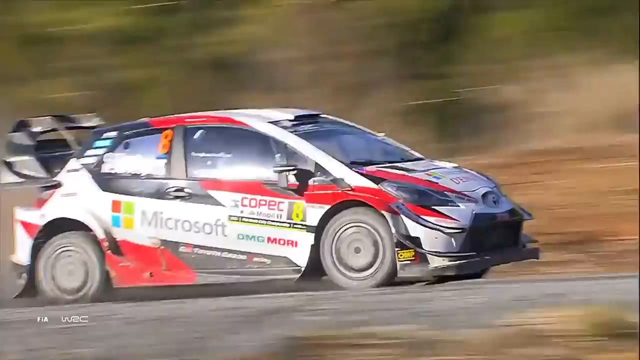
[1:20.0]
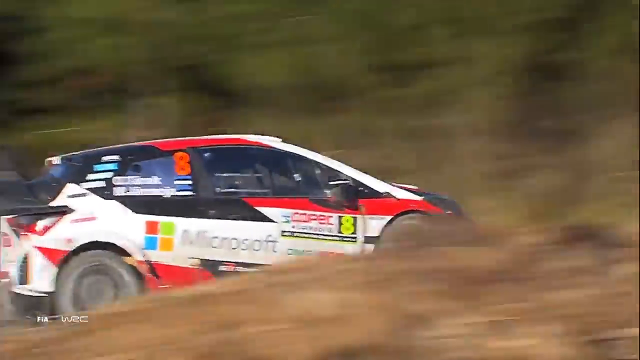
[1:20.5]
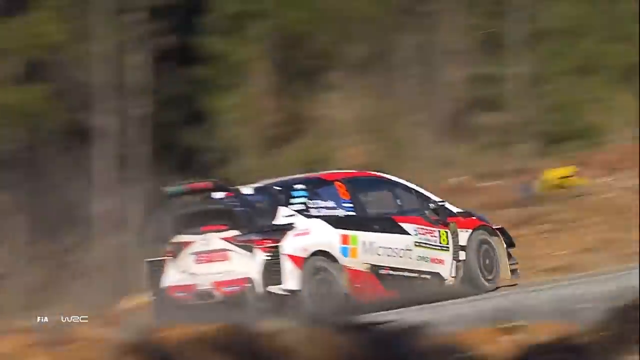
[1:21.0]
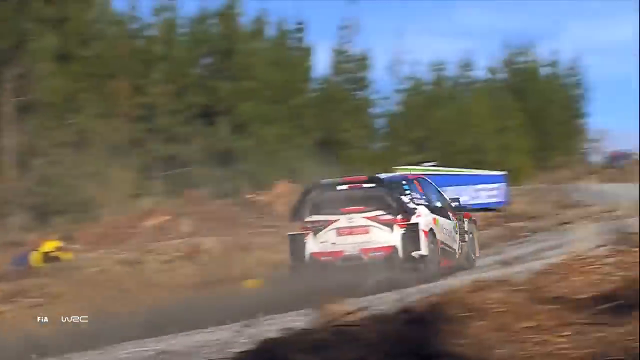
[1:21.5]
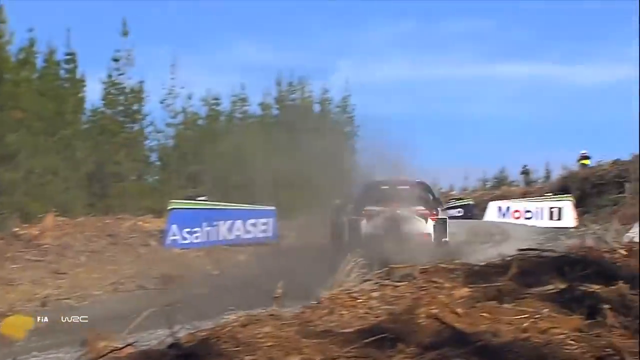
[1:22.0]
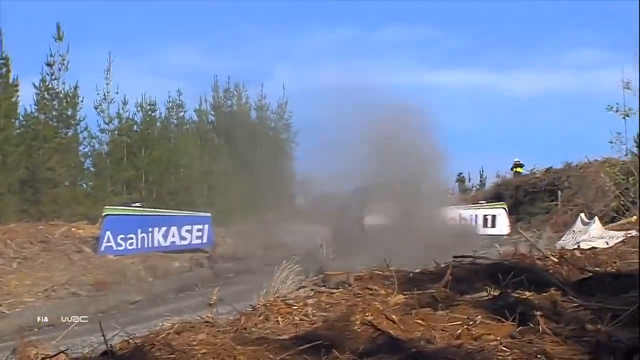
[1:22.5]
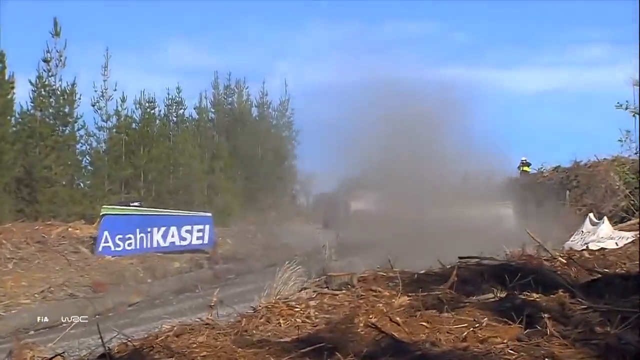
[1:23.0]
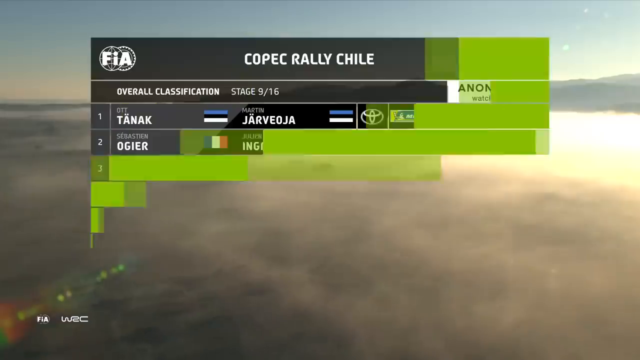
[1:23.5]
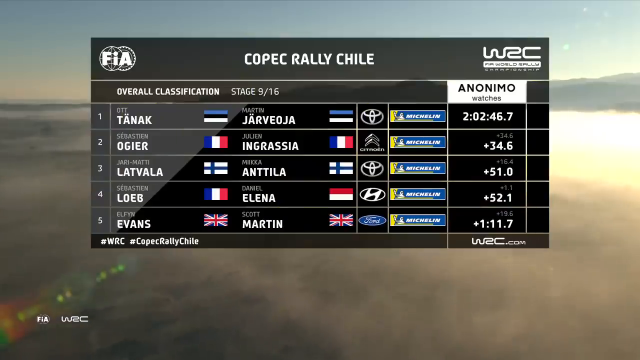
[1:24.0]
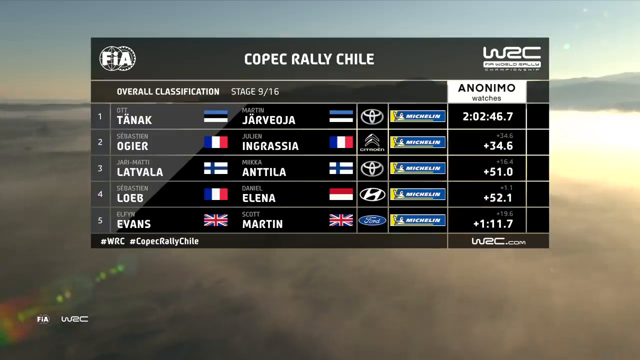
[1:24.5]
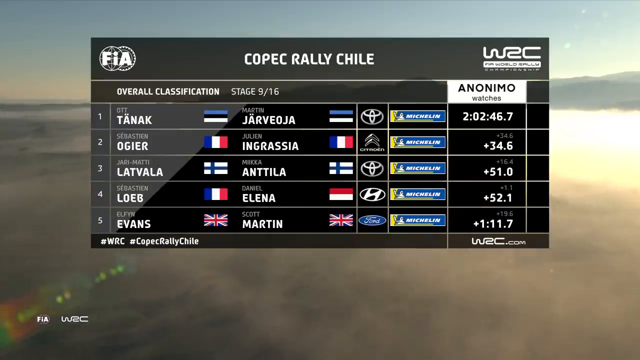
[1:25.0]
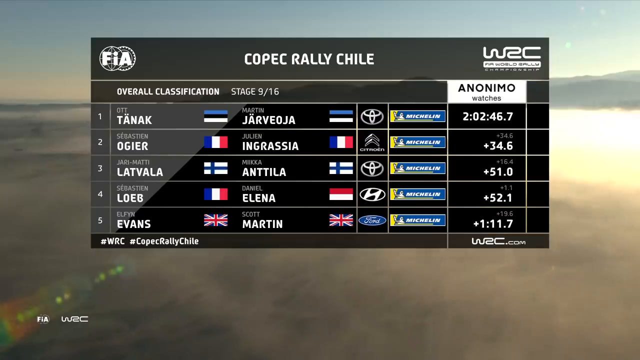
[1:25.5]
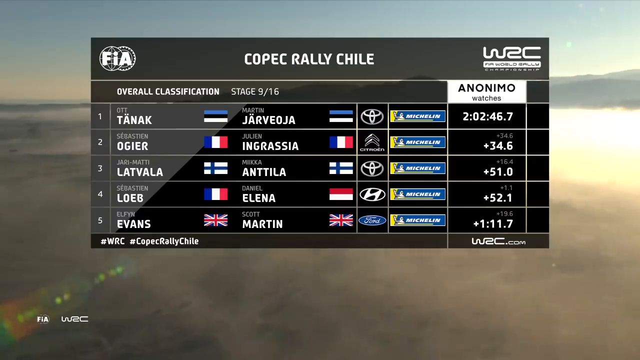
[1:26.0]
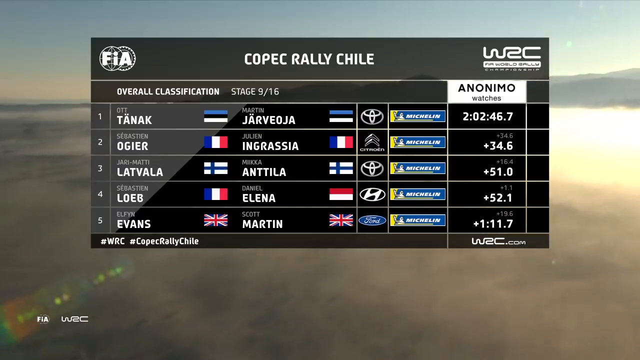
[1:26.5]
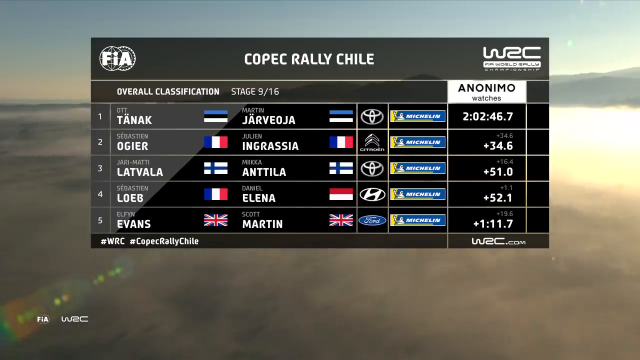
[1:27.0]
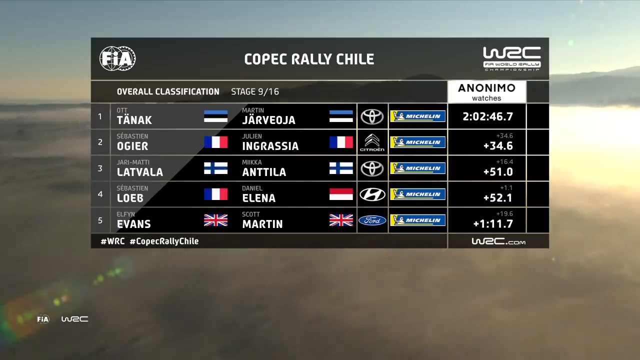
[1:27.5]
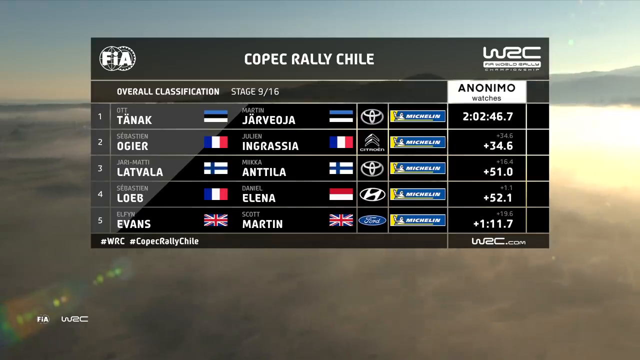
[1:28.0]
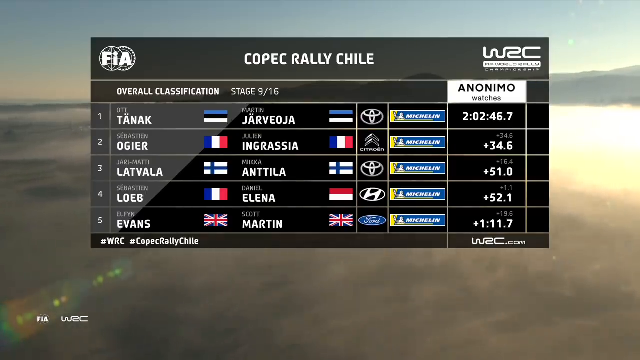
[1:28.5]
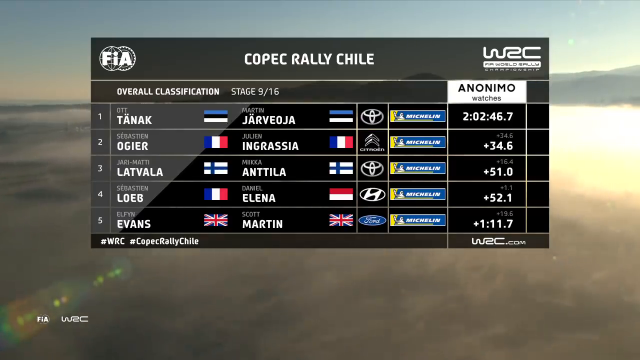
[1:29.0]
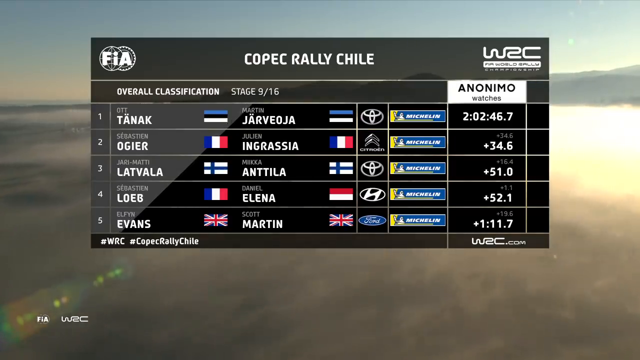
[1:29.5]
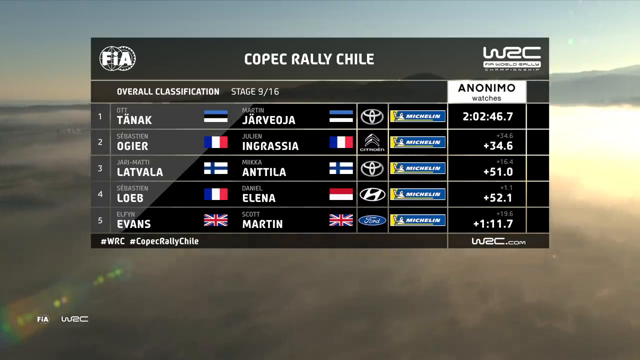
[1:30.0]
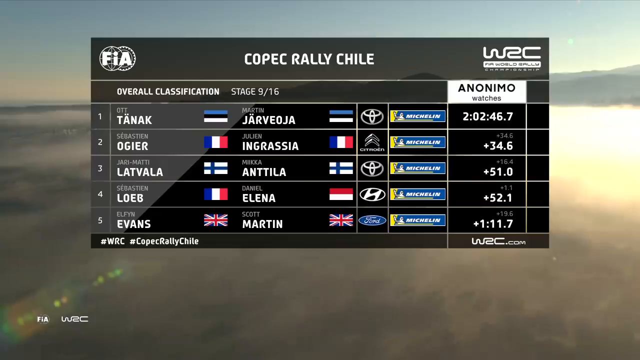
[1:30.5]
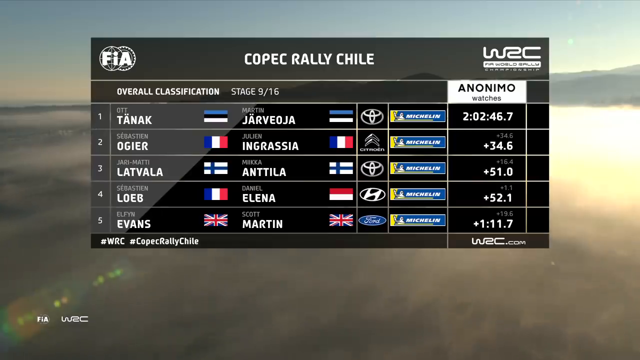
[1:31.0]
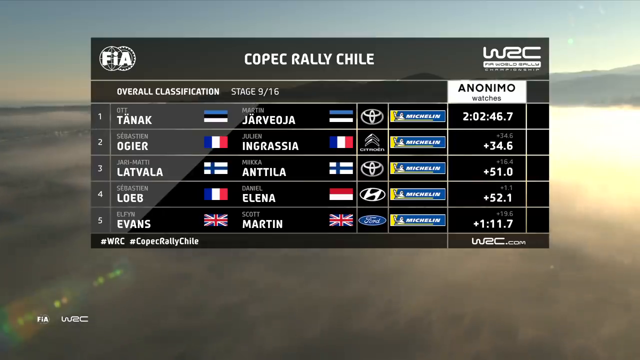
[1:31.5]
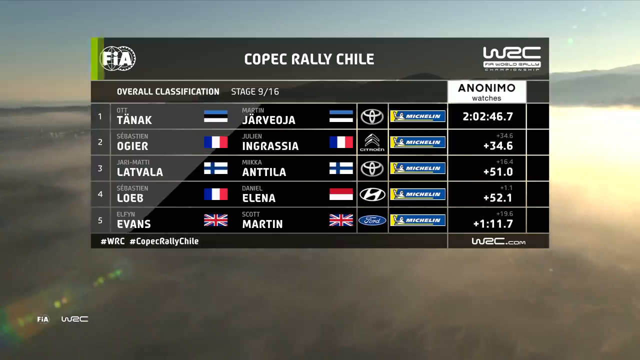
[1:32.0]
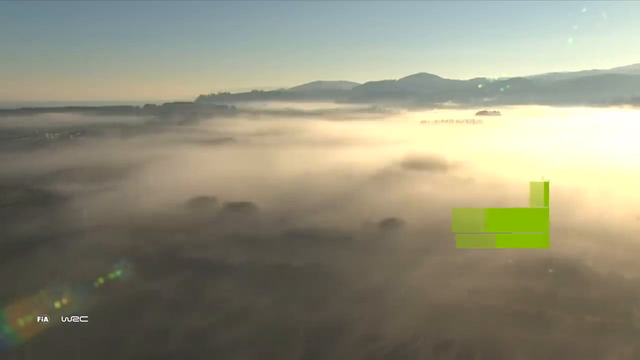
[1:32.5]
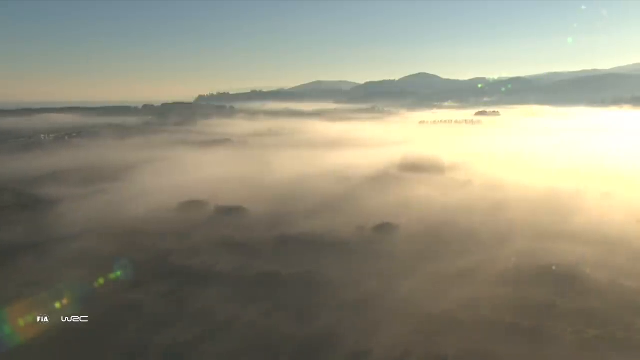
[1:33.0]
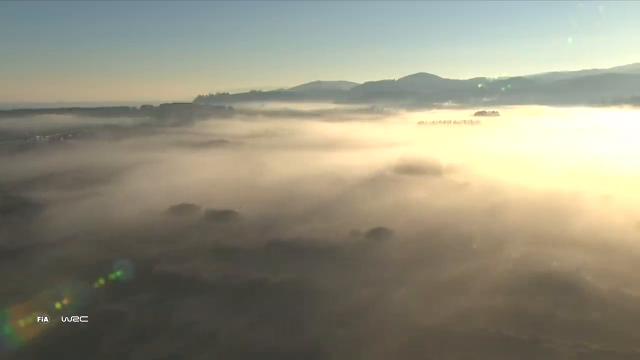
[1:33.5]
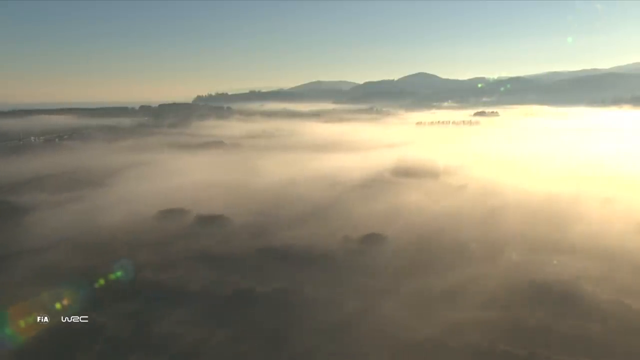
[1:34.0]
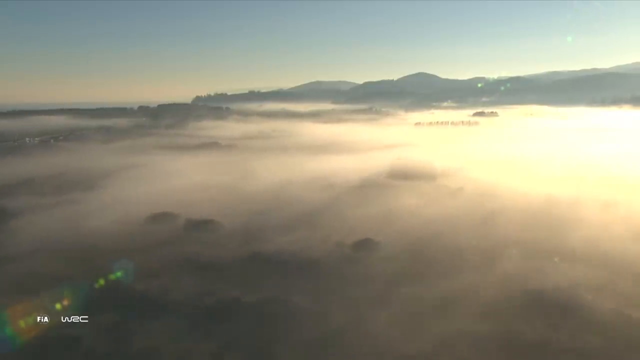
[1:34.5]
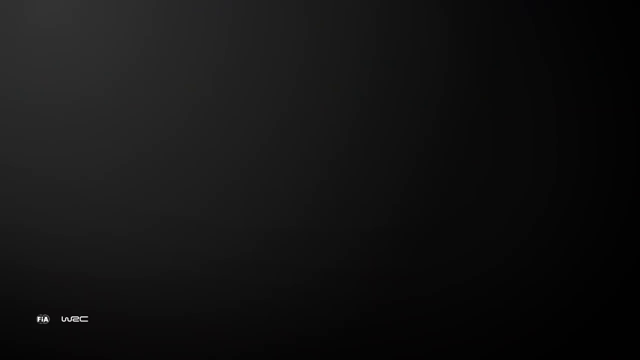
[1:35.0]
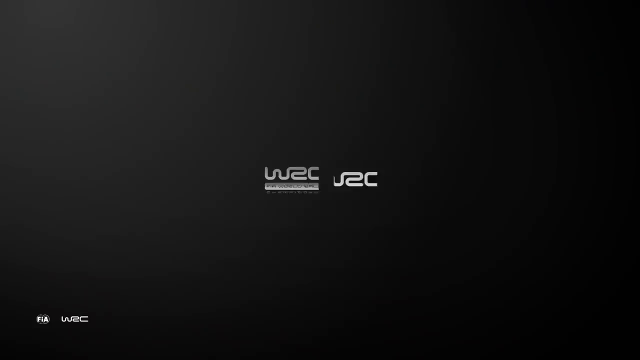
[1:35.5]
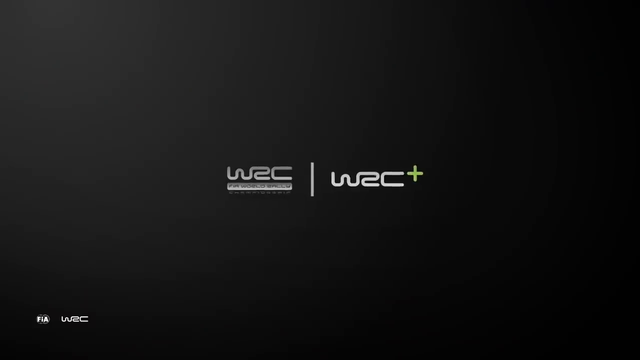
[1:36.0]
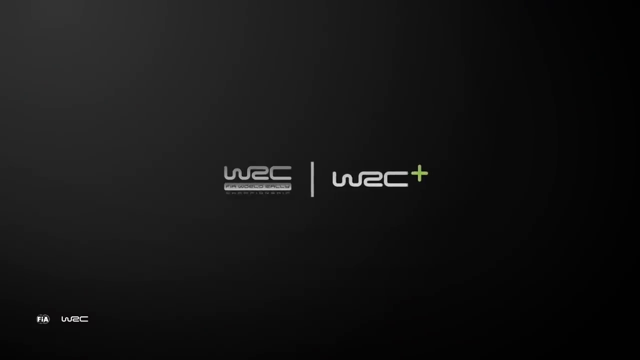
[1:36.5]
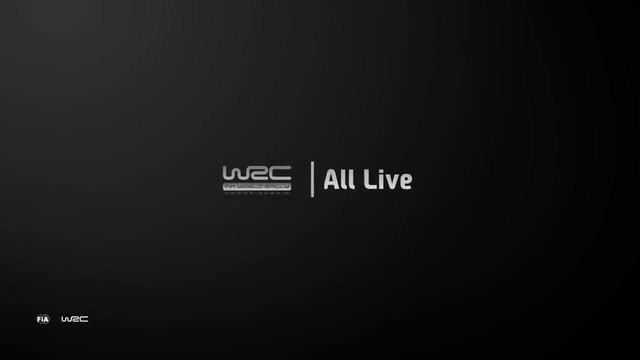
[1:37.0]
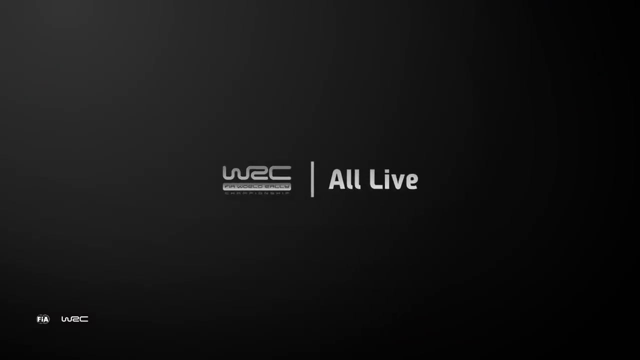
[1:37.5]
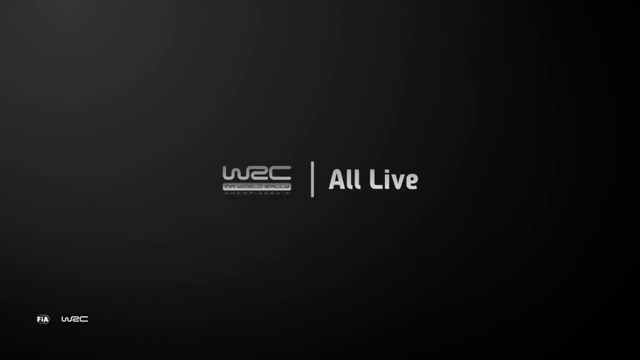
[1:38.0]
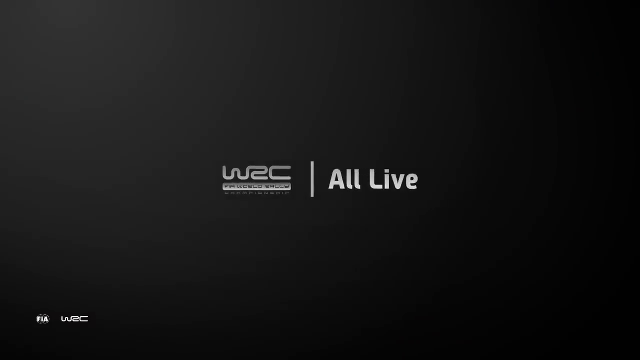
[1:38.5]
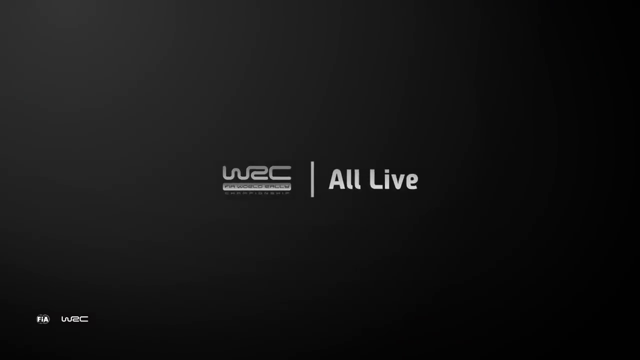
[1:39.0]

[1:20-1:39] From the 2019 COPEC rally race in Chile on an outdoor dirt road, a chart of the overall classifications is shown for stage 9 out of 16, listing how the finishers did. A few details of the car are visible as it goes around a curve. The chart shows flags for the countries of the drivers and plus signs indicating how many minutes and seconds longer each took. The first finisher took about two hours and two minutes, the next was about 34 seconds behind, and the chart continues down through second, third, fourth and fifth places, listing each person's name, their flag, and probably the passenger's name.